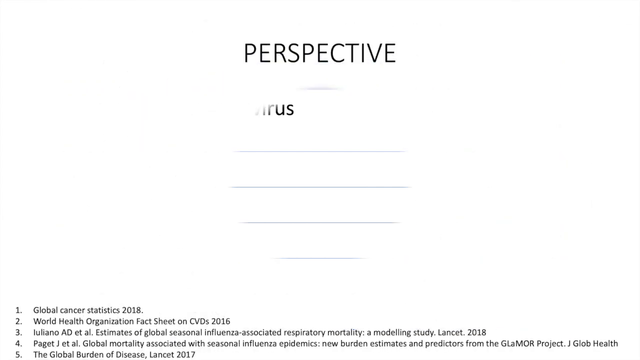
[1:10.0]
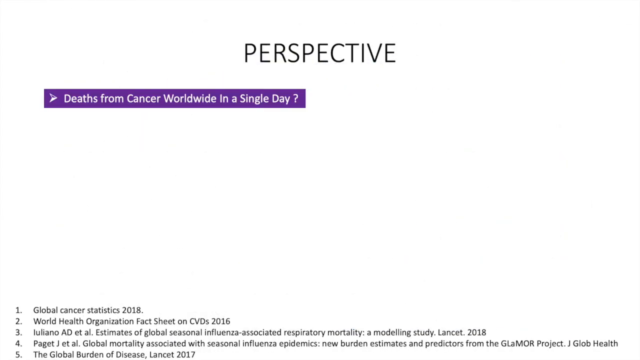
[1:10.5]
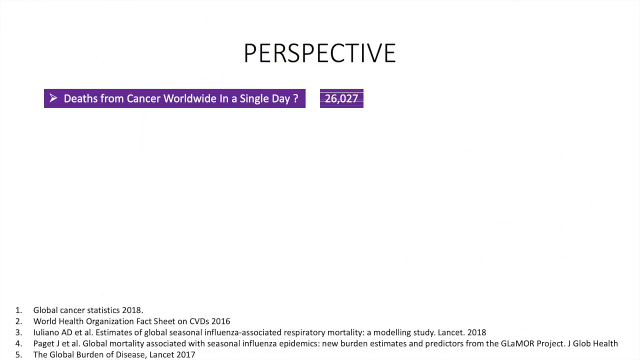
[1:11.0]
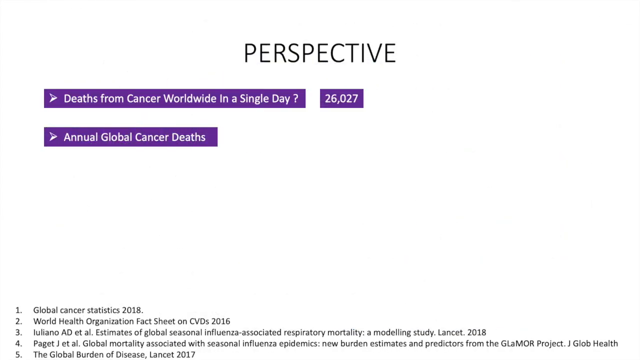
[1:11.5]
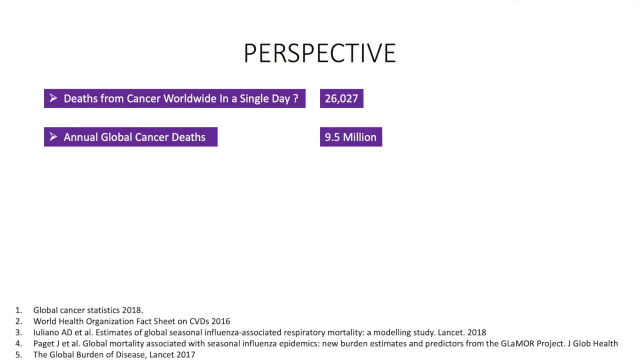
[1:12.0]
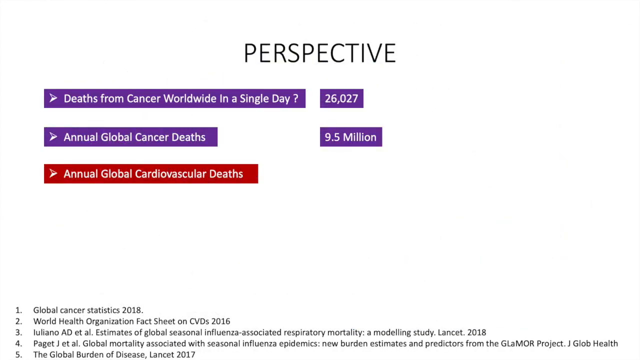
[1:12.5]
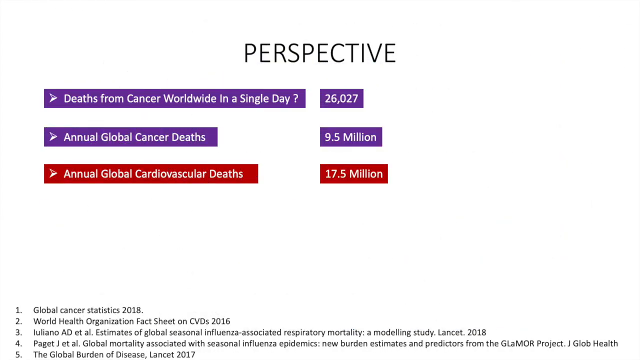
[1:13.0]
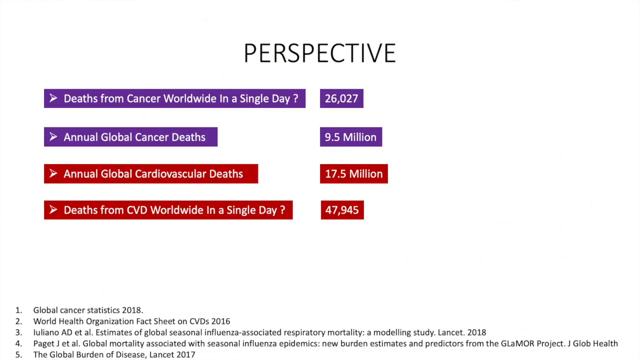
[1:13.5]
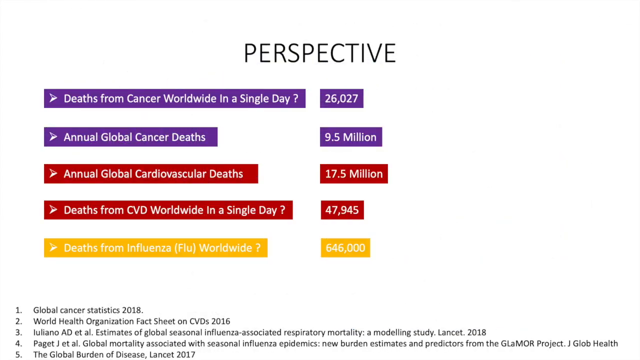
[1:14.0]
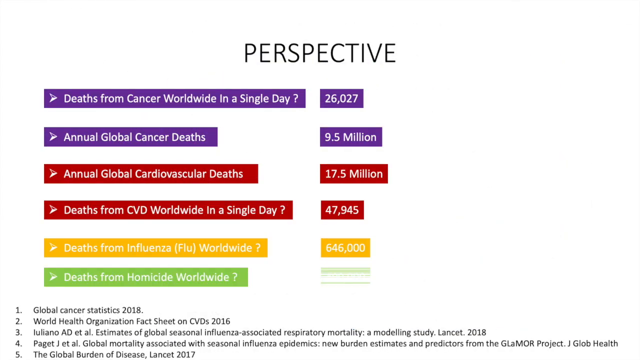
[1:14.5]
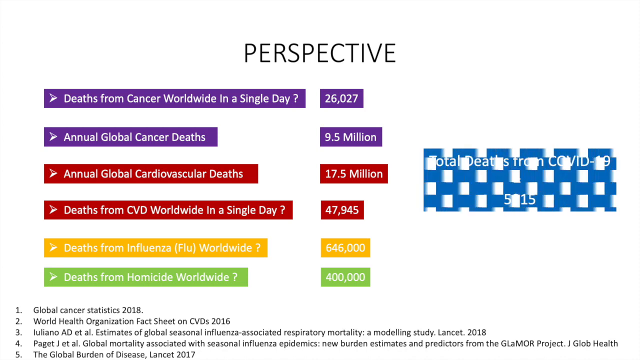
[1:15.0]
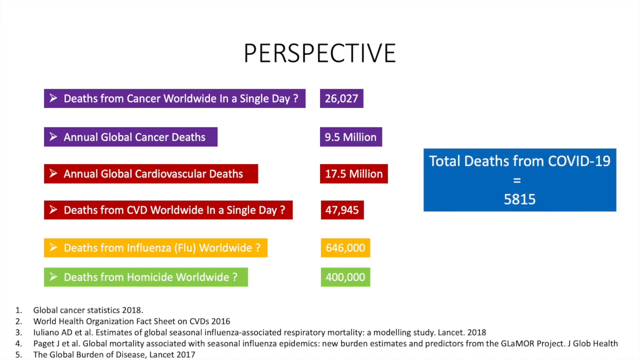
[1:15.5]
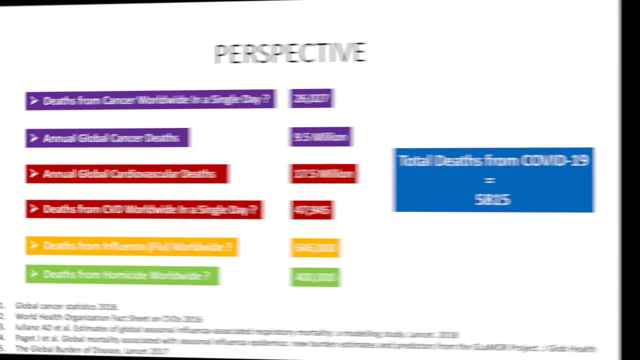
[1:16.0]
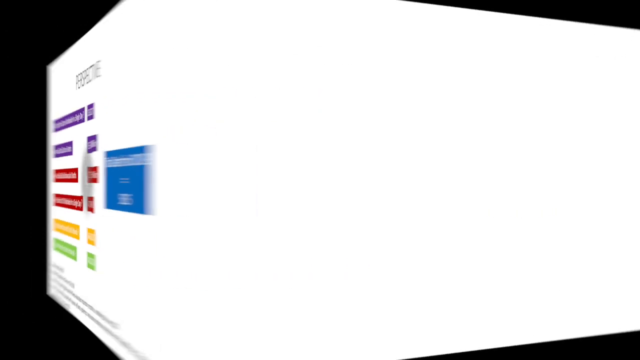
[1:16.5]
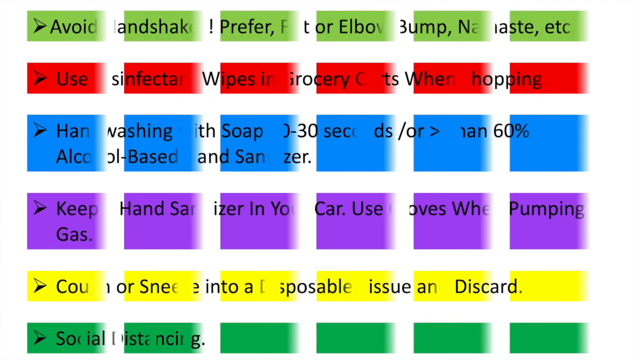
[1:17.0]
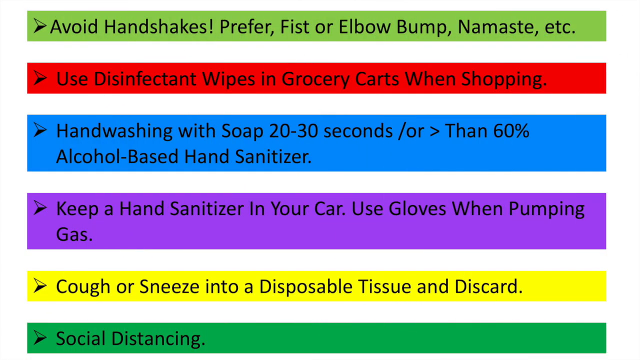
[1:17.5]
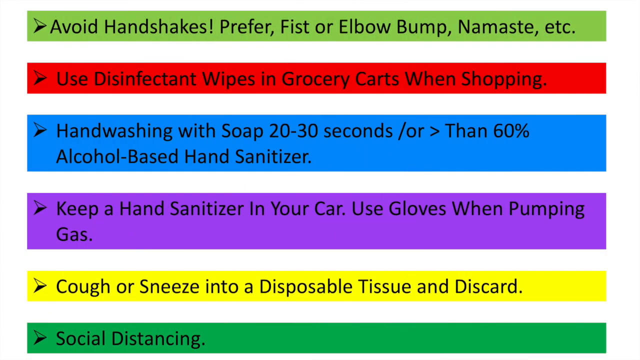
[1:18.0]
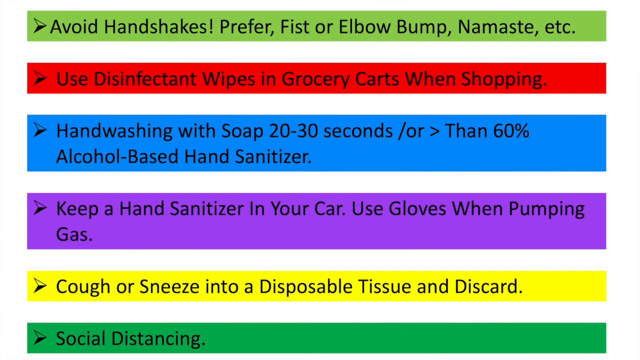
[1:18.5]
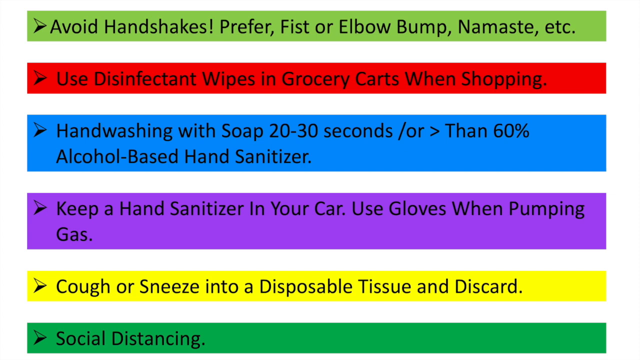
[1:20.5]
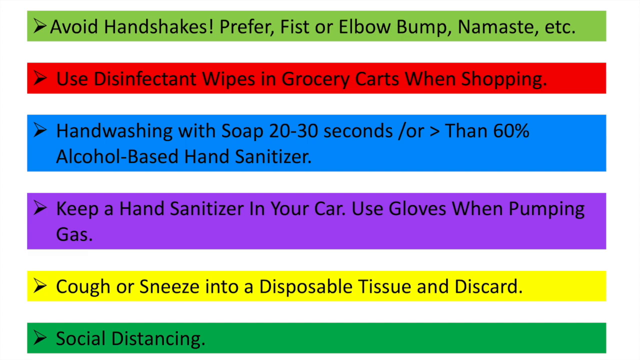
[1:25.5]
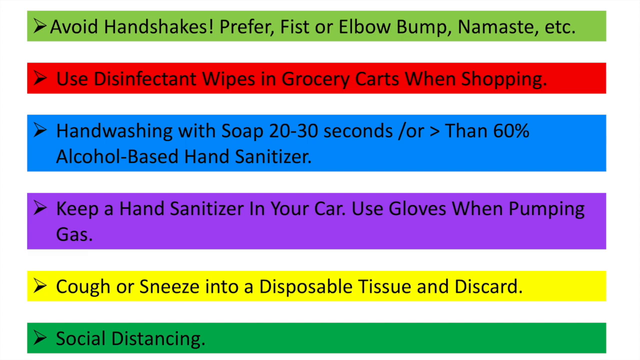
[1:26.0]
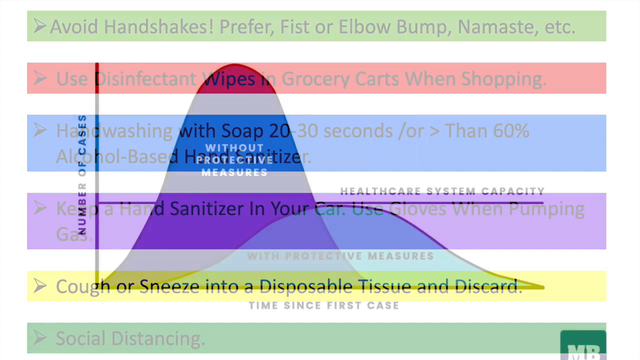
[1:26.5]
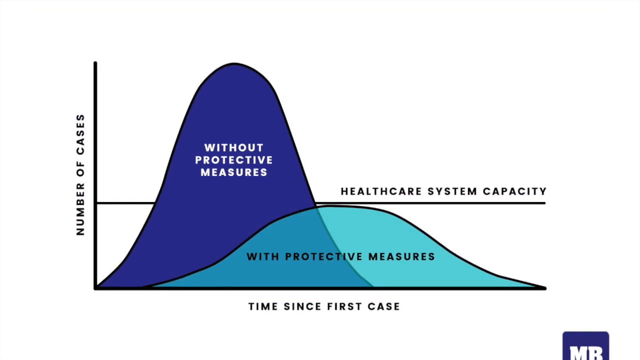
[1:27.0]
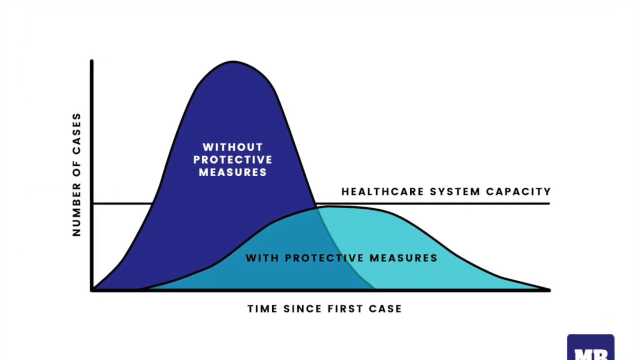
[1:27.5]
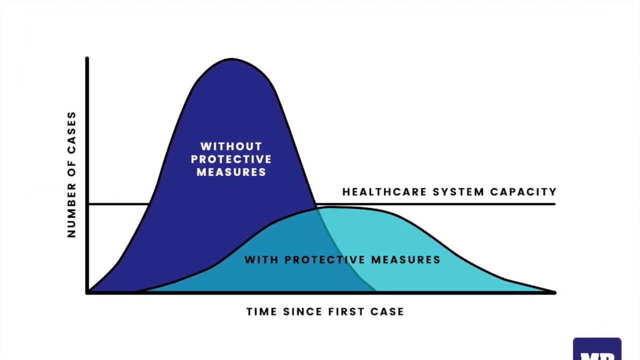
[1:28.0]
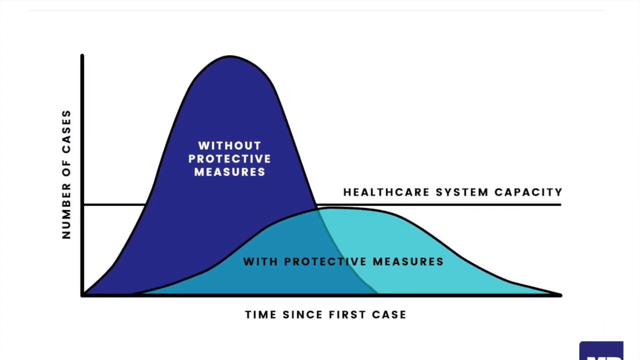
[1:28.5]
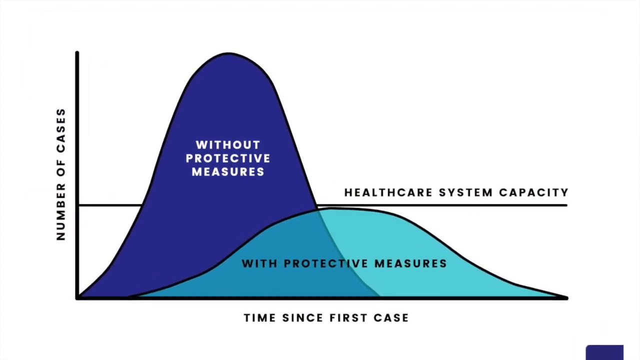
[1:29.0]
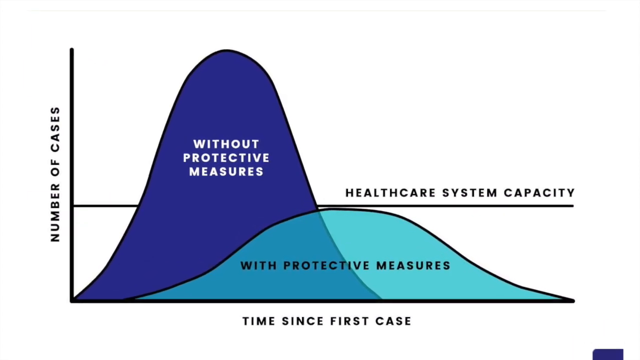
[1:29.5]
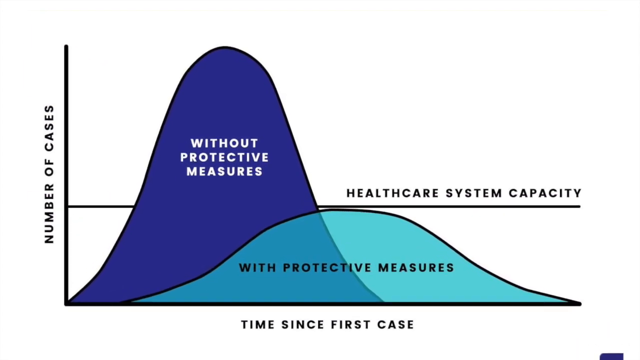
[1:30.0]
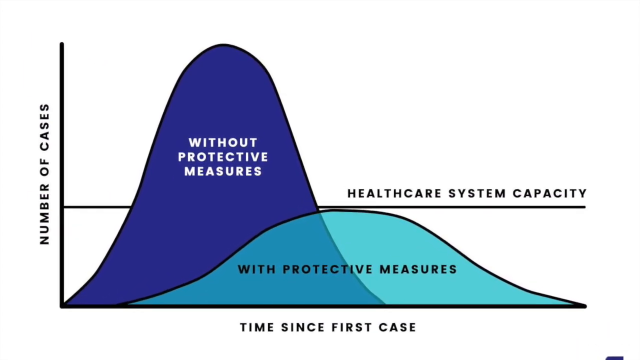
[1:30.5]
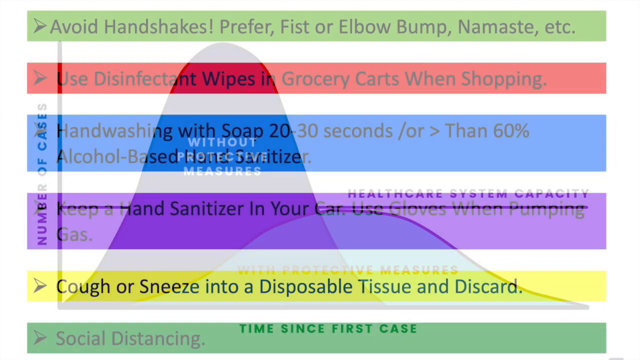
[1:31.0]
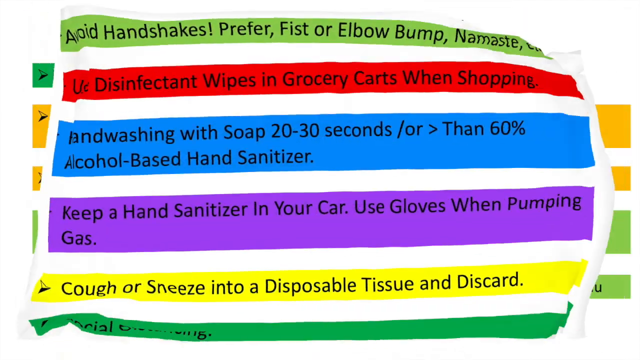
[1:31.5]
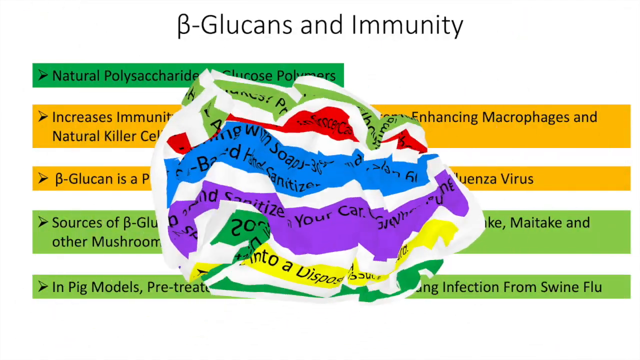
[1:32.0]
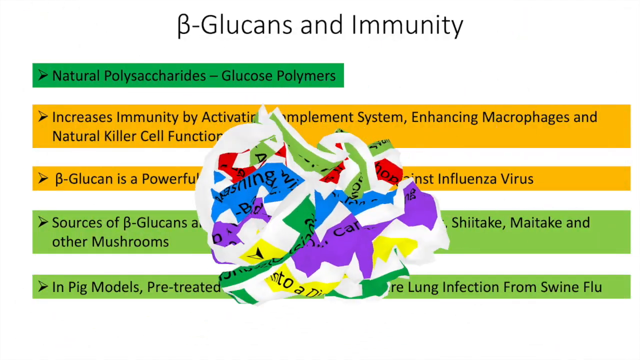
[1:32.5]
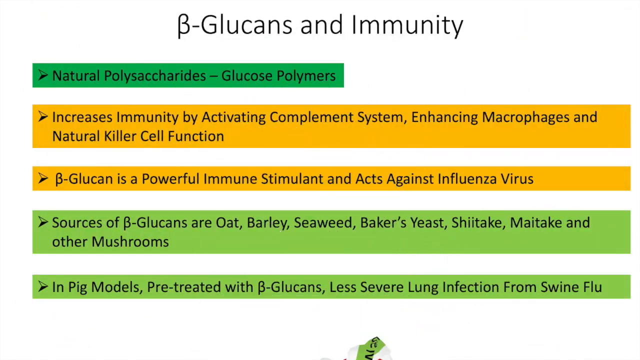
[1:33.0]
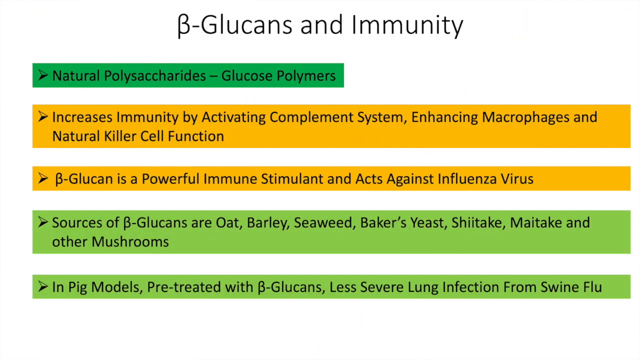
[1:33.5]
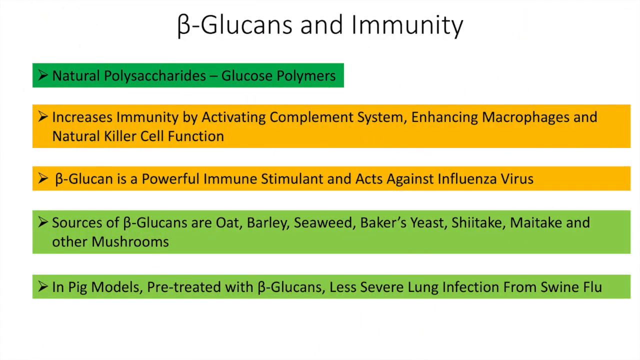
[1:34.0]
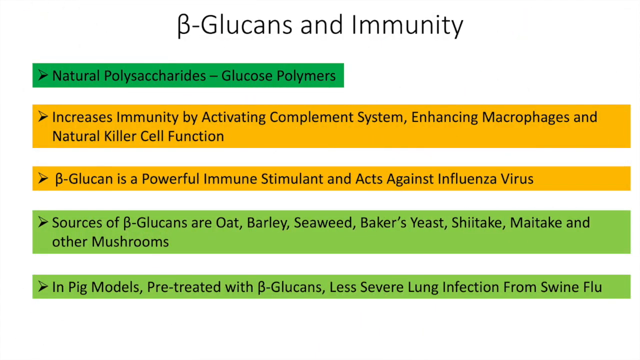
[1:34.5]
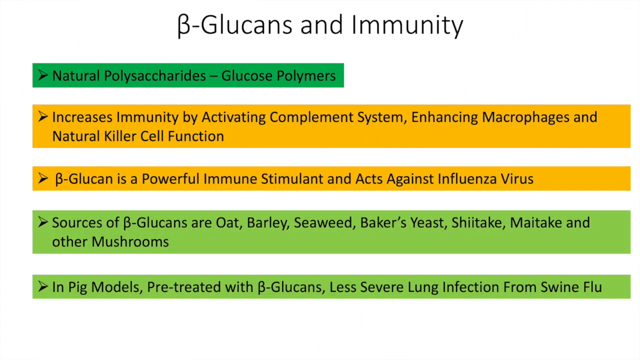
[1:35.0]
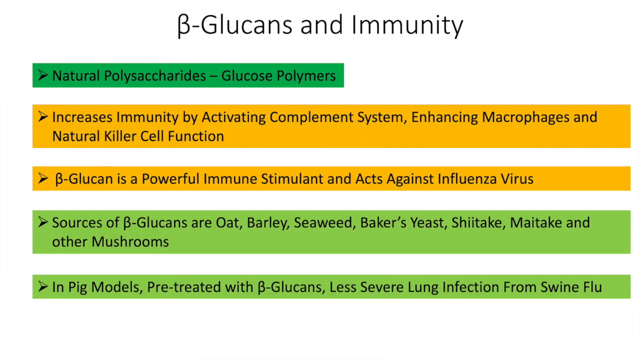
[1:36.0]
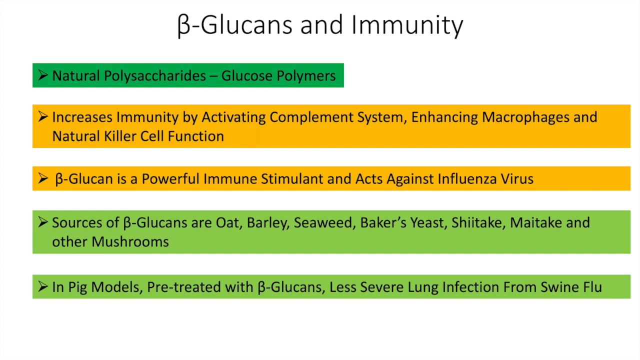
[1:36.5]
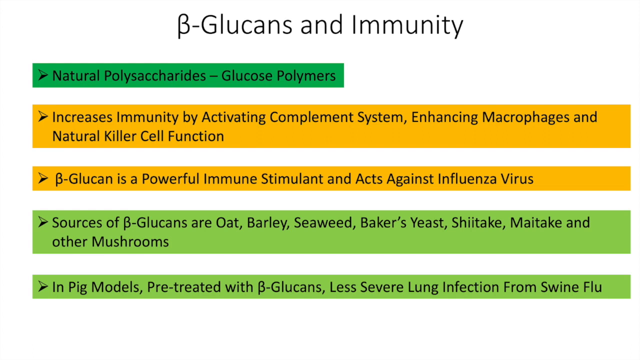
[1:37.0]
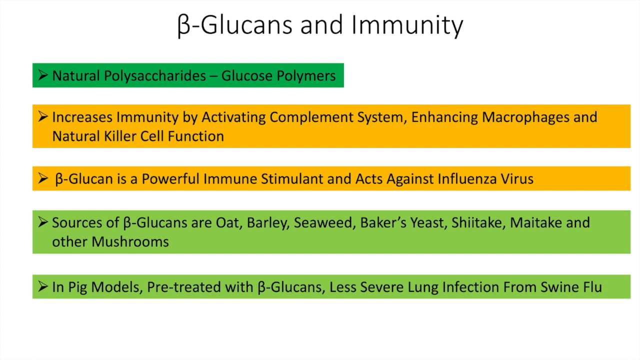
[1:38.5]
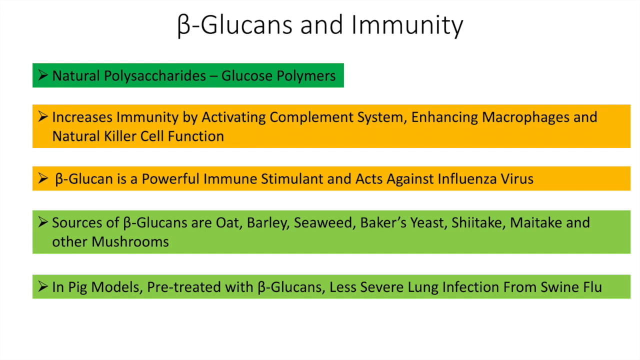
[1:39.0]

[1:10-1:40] Another title page appears, mostly white in background, with the word "PERSPECTIVE" in full caps at the top and a blue semi-circle underneath it. Text then appears beneath the word. The first two lines are in purple rectangles with white writing: "deaths from cancer worldwide in a single day" with the answer "26,027", and below it "annual global cancer deaths, 9.5 million". Below those are two red rectangles: "annual global cardiovascular deaths 17.5 million" and "deaths from CVD worldwide in a single day 47,945". Next, a yellow rectangular box reads "deaths from influenza (flu) worldwide? 646,000". The final box on the page, in light green, reads "deaths from homicide worldwide? 400,000". Off to the right of all this text, in the vertical middle of the screen, is a bigger blue rectangular box holding the world's total deaths from COVID-19, with an equal sign on the second line and "5815" on the third line.